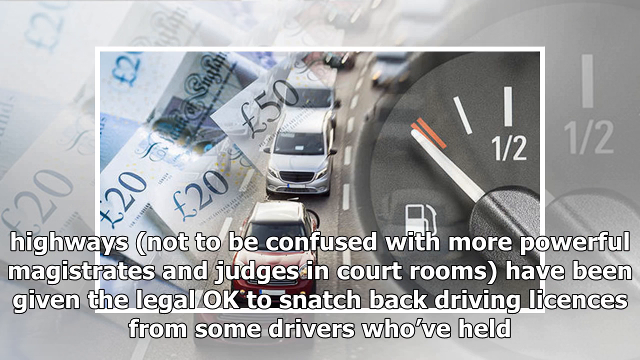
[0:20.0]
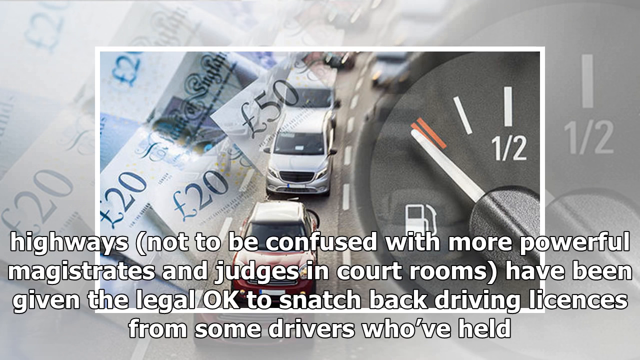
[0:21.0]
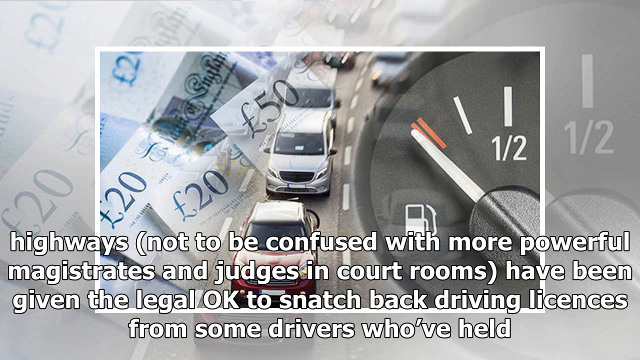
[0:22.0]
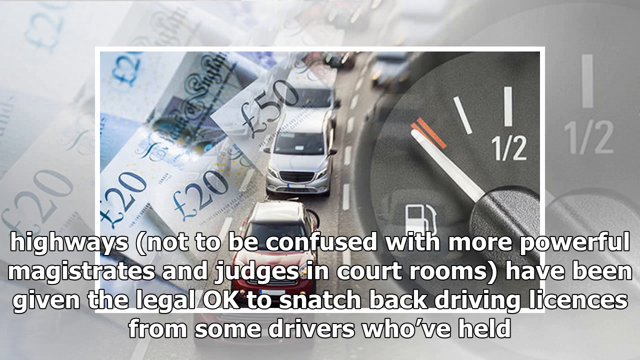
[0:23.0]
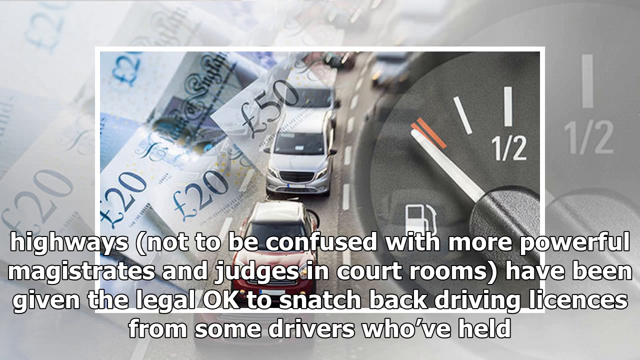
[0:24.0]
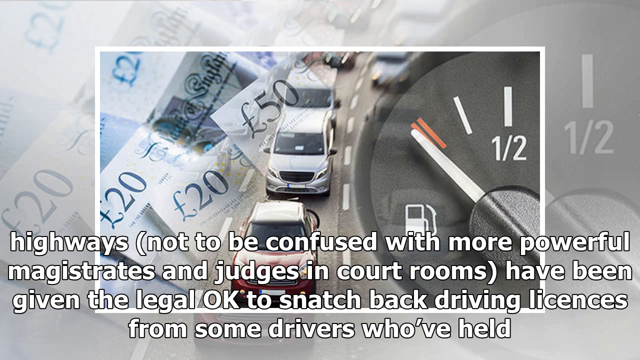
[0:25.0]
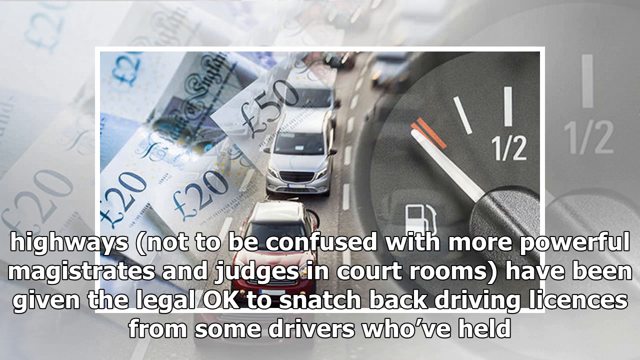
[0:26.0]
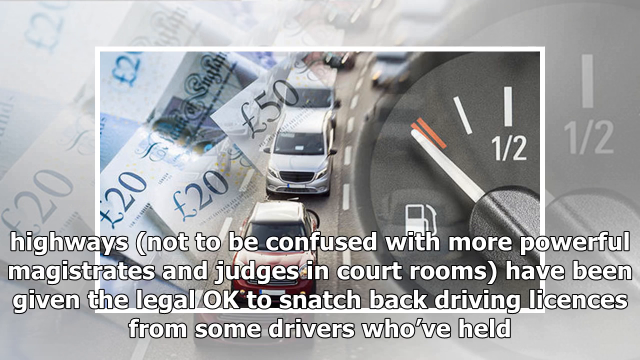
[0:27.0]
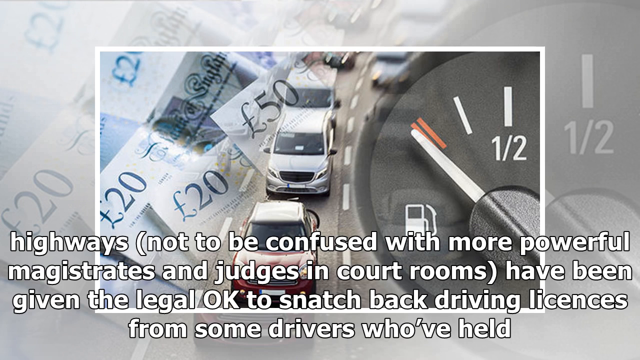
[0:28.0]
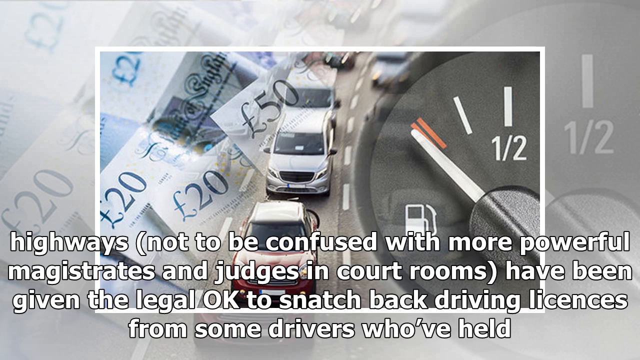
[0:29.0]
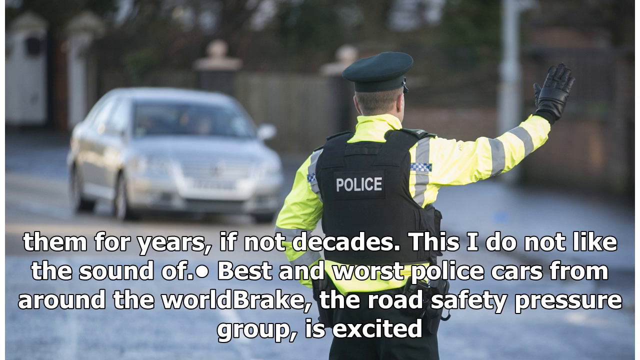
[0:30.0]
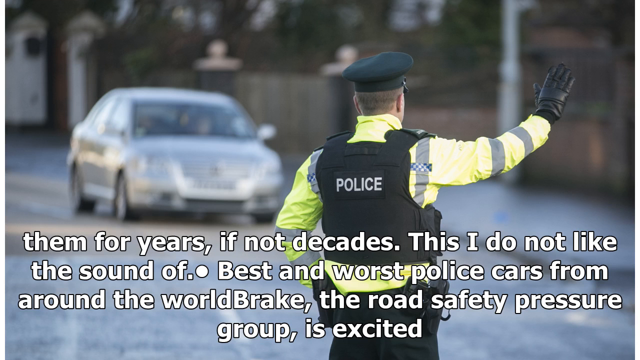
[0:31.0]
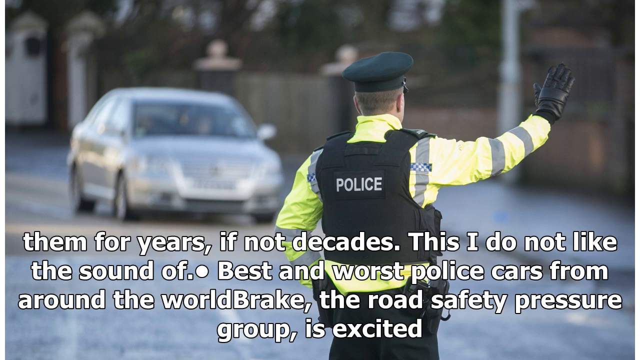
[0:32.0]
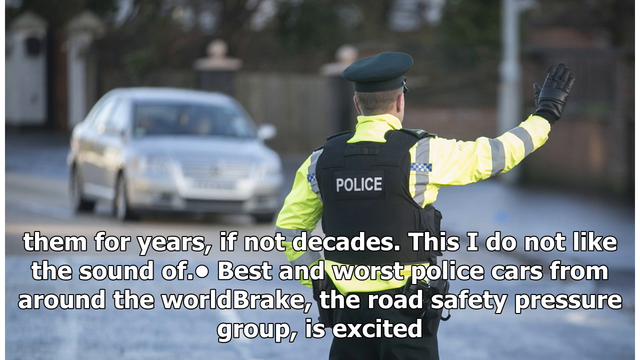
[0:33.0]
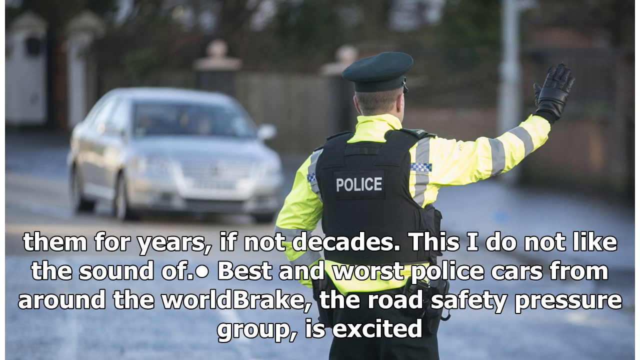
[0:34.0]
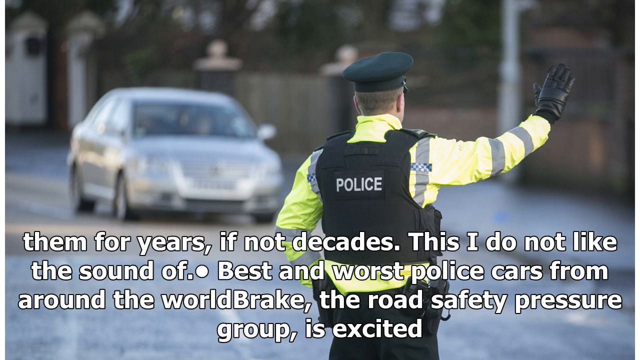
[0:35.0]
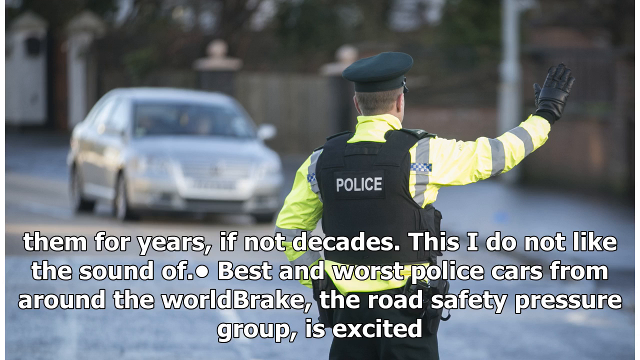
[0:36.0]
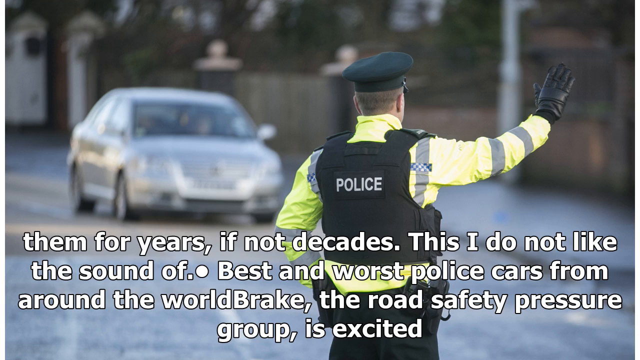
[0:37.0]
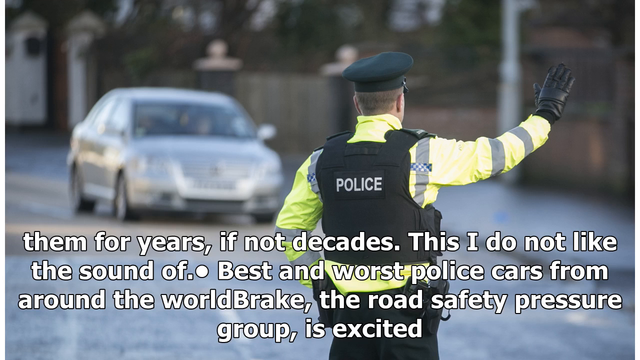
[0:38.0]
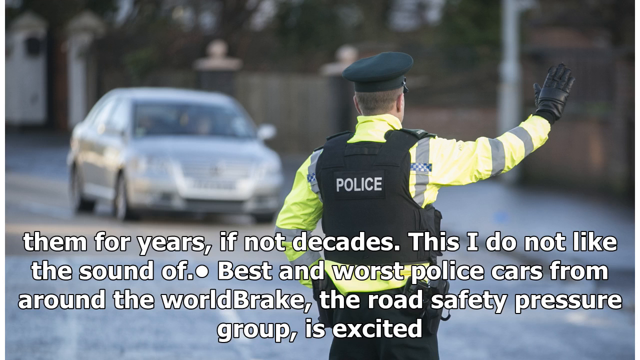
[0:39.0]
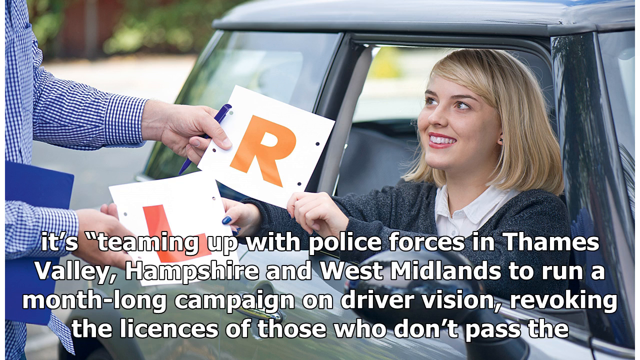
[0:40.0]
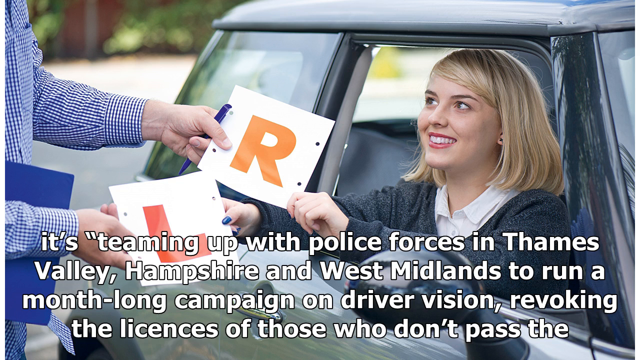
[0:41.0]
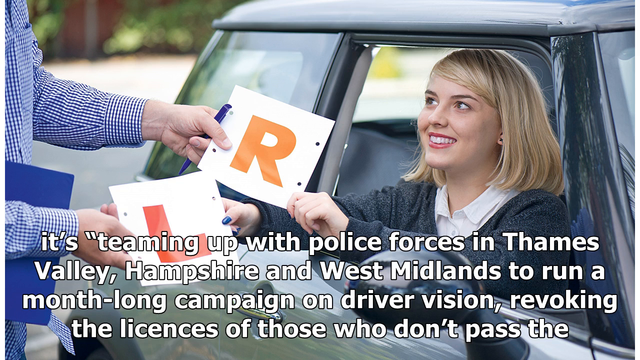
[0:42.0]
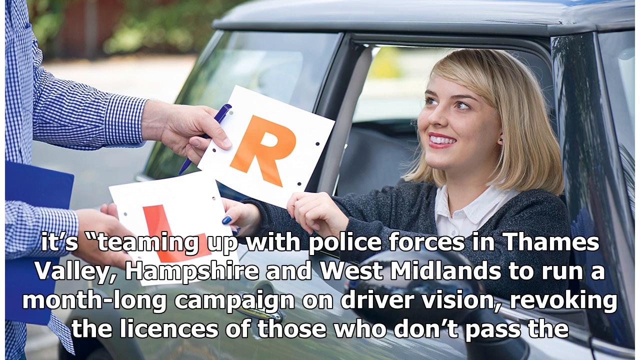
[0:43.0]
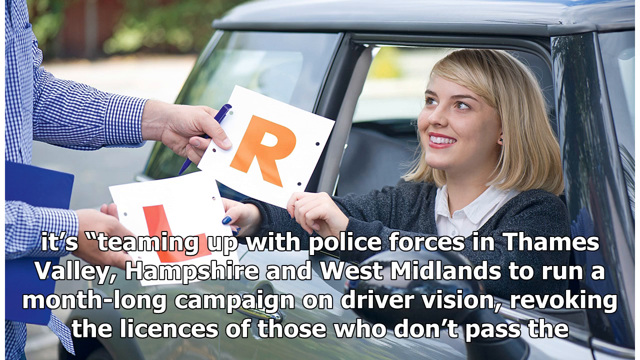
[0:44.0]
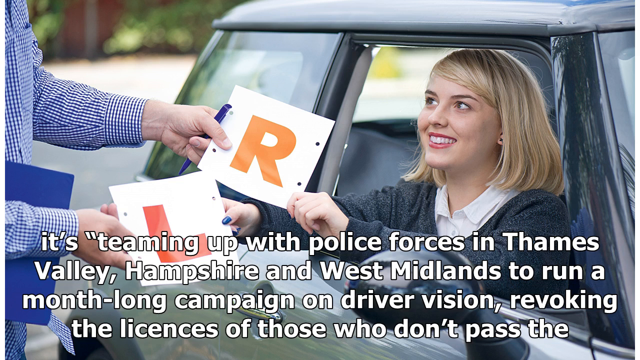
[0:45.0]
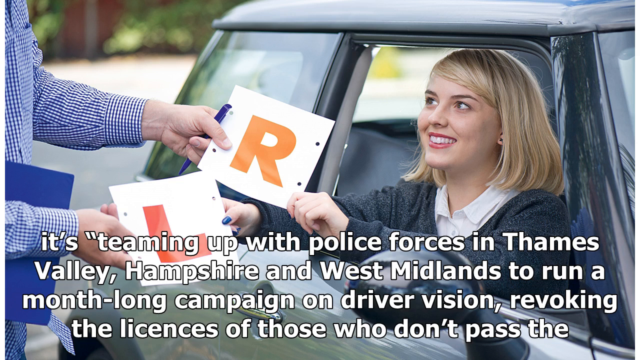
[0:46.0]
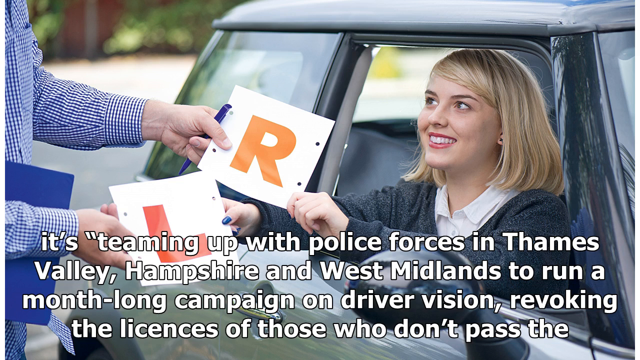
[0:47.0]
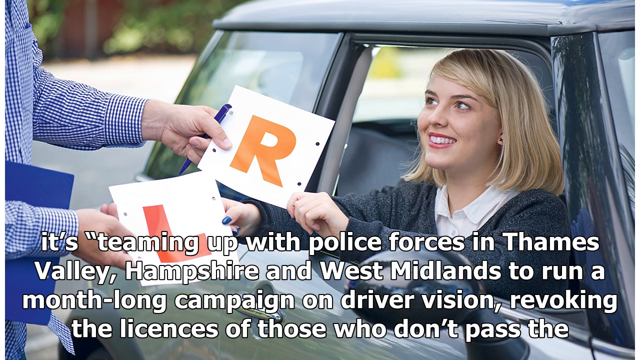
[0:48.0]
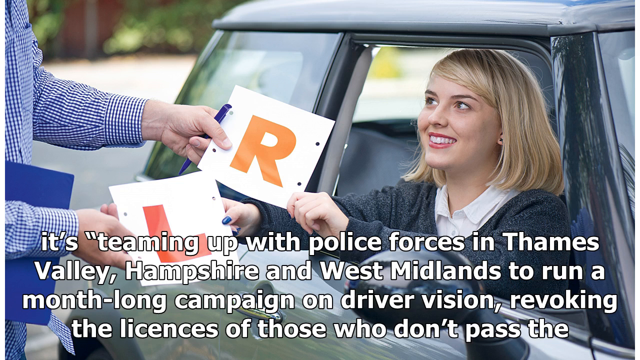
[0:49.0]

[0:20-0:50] Wording at the bottom of the screen refers to highways, says they are not to be confused with more powerful magistrates and judges in courtrooms, and says they have been given the legal okay to snatch back driving licenses and put them on hold. A picture shows a speedometer and a gas gauge reading empty. Pictures of vans and cars are kind of in the middle of the background, and on the far left are money amounts that look like they may be pounds, including some 20s and a 50. A picture of a police officer shows him with his arm up, stopping traffic.